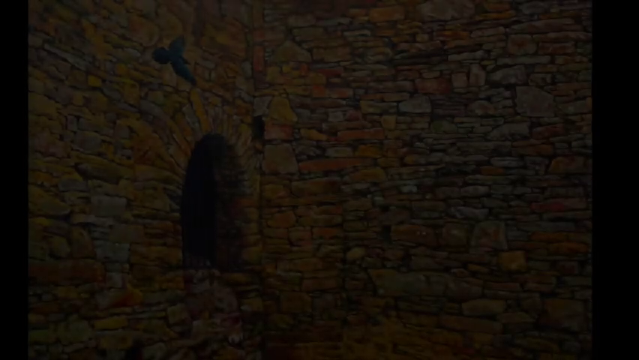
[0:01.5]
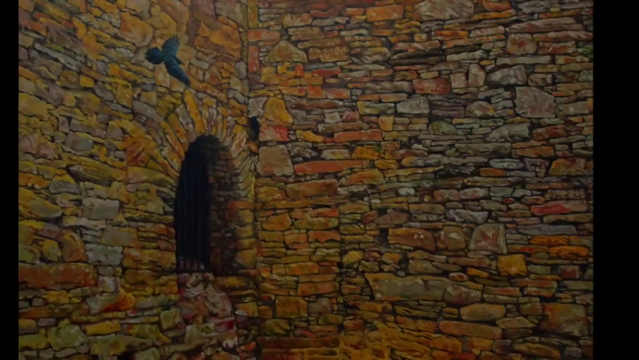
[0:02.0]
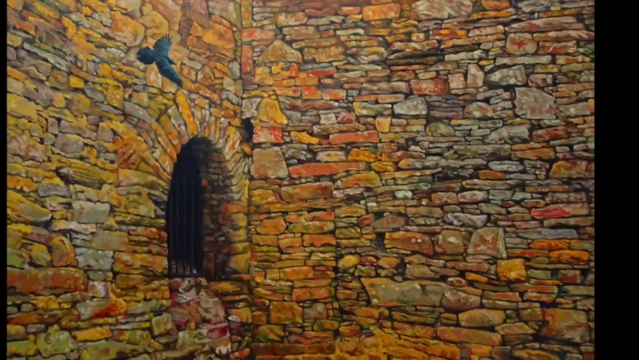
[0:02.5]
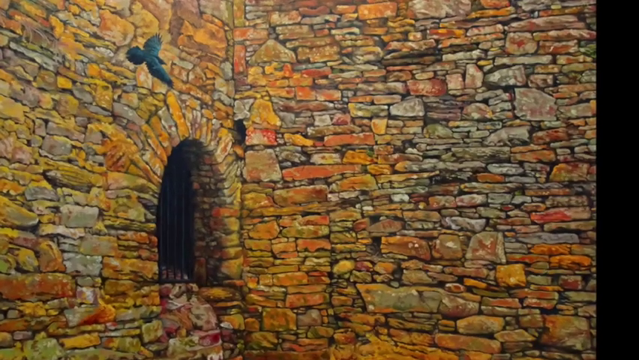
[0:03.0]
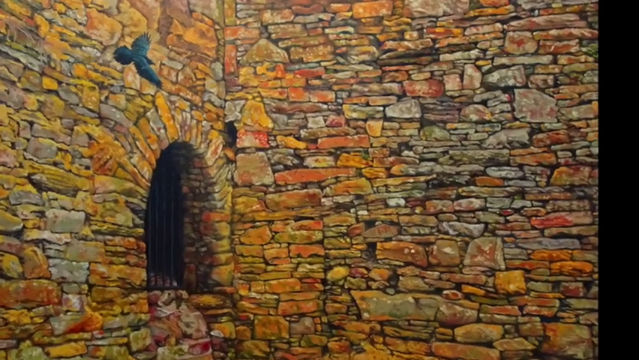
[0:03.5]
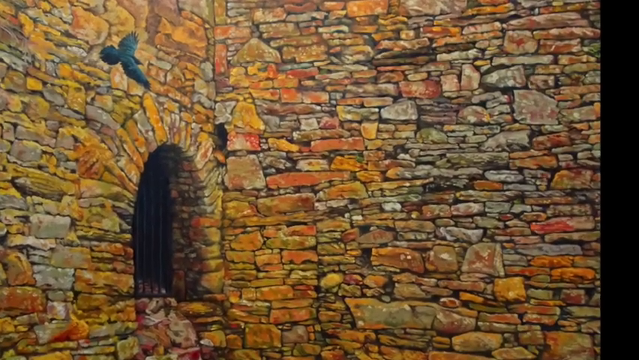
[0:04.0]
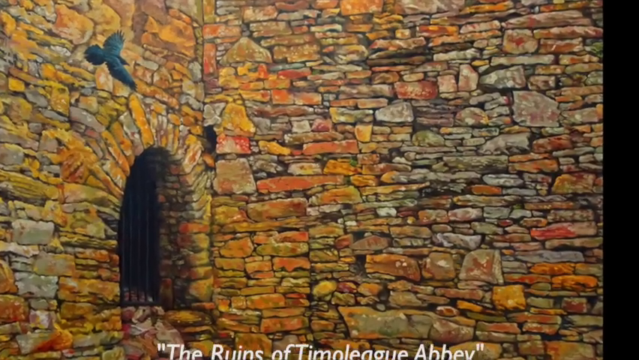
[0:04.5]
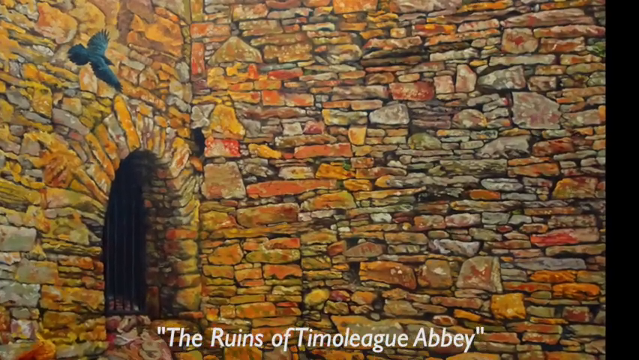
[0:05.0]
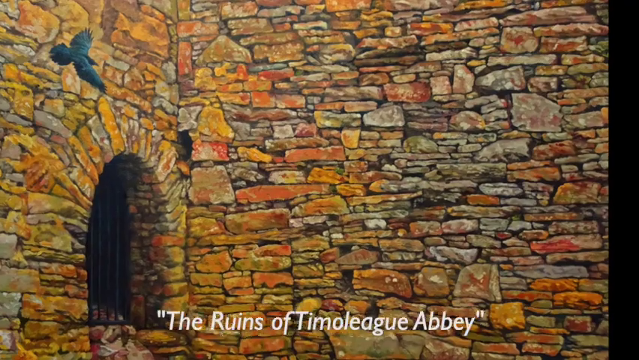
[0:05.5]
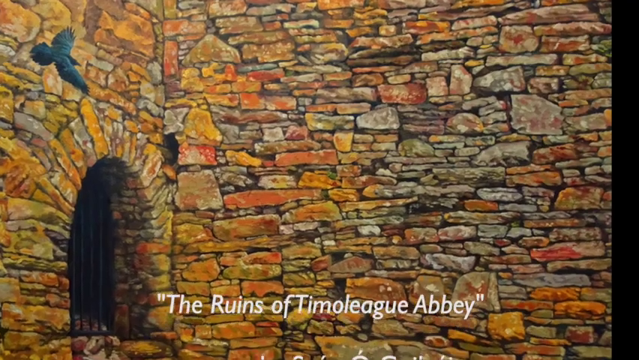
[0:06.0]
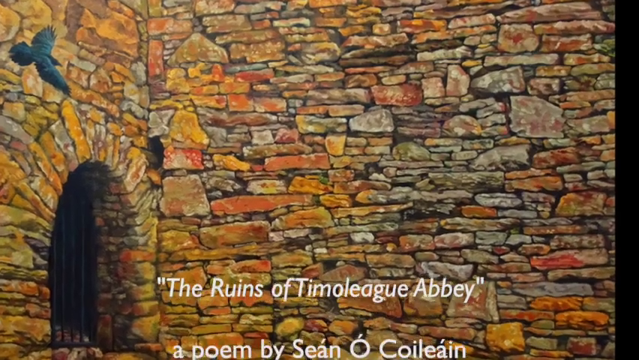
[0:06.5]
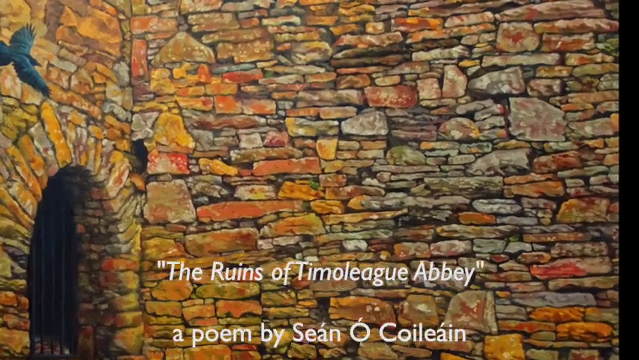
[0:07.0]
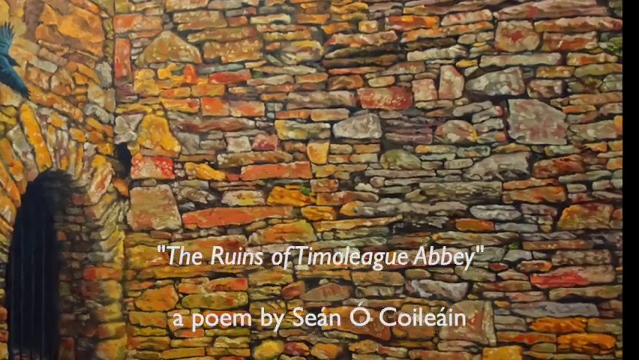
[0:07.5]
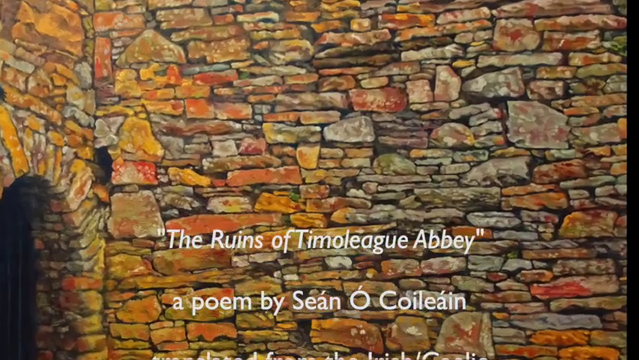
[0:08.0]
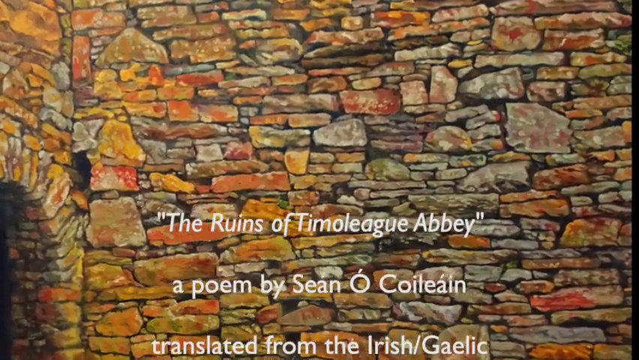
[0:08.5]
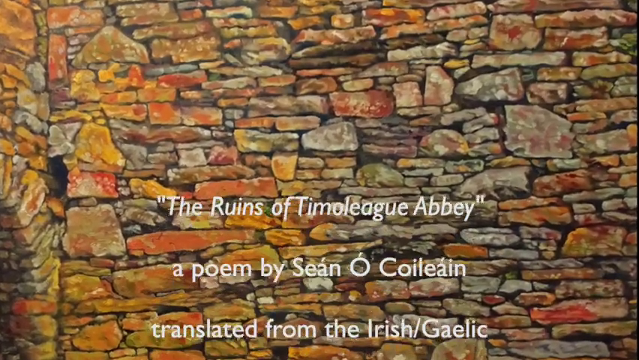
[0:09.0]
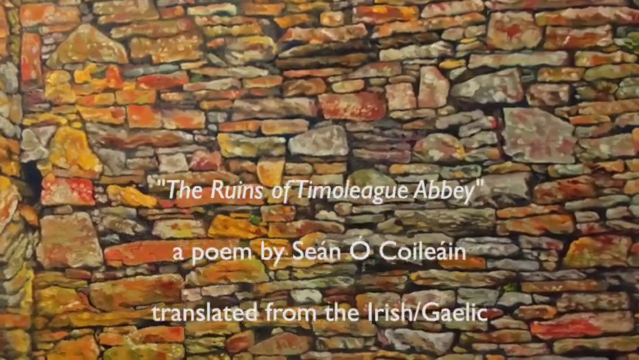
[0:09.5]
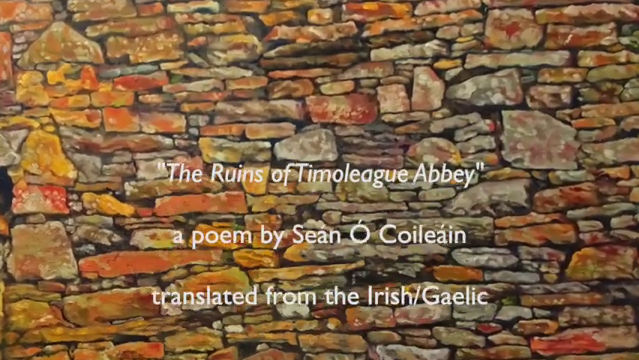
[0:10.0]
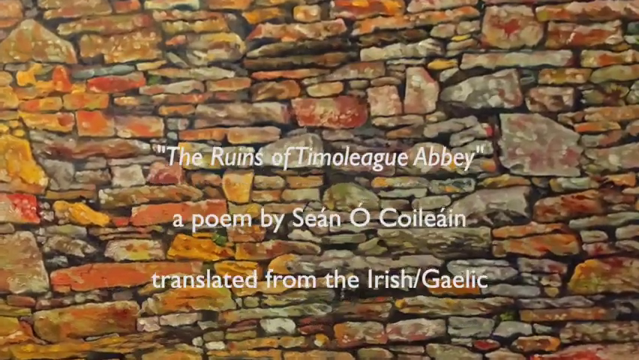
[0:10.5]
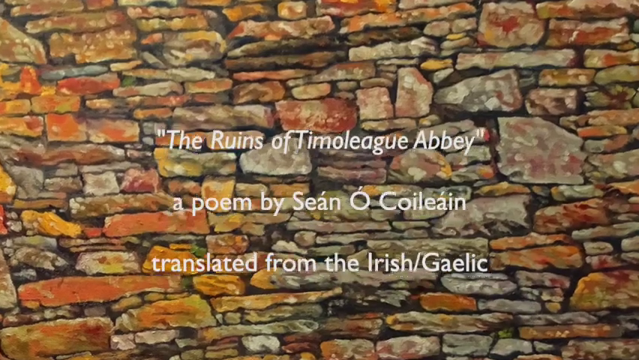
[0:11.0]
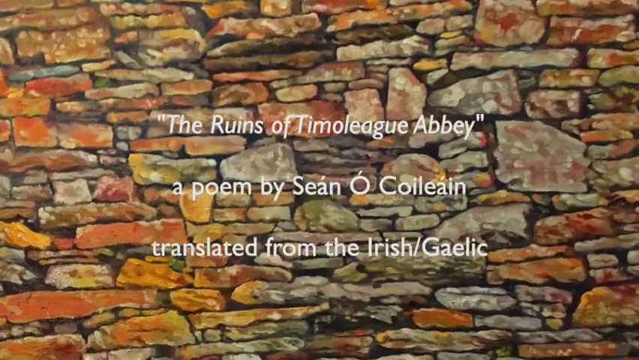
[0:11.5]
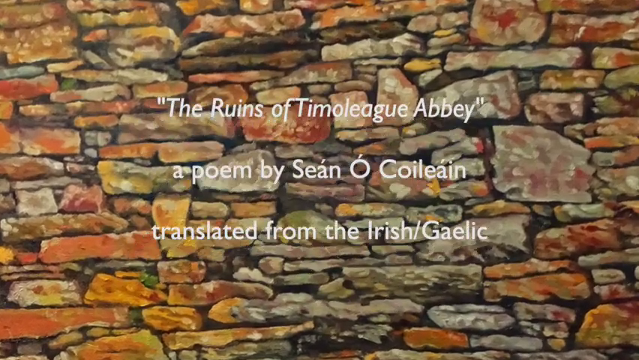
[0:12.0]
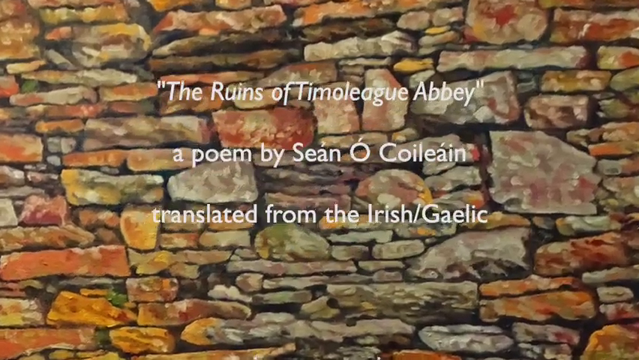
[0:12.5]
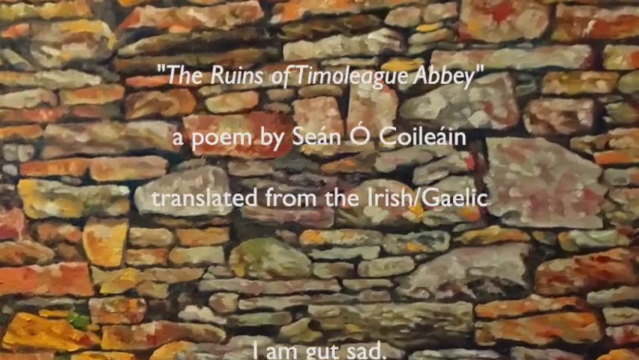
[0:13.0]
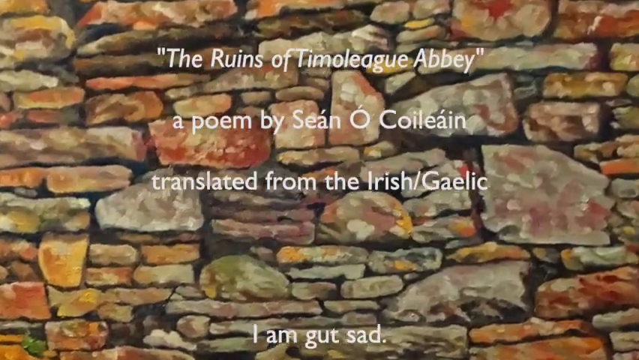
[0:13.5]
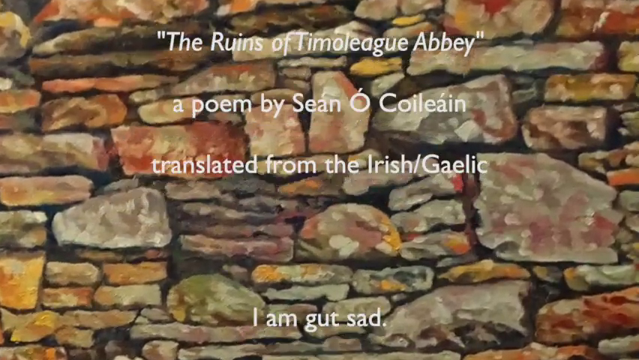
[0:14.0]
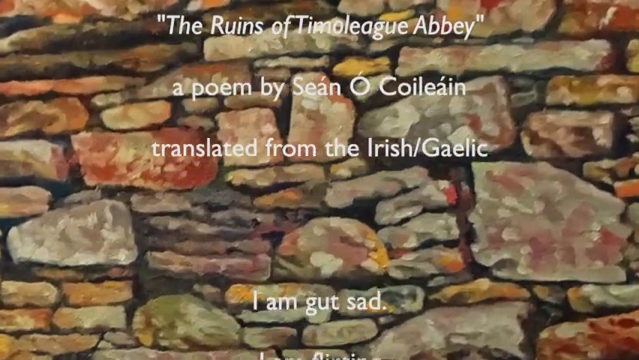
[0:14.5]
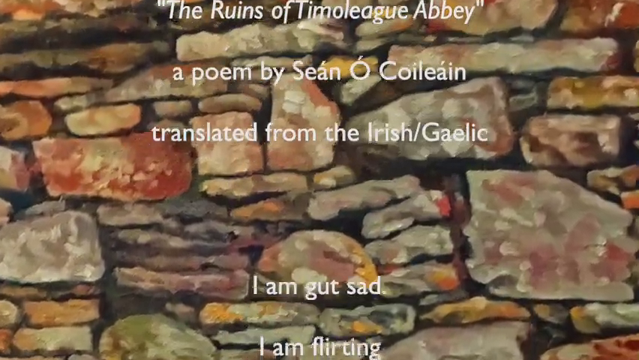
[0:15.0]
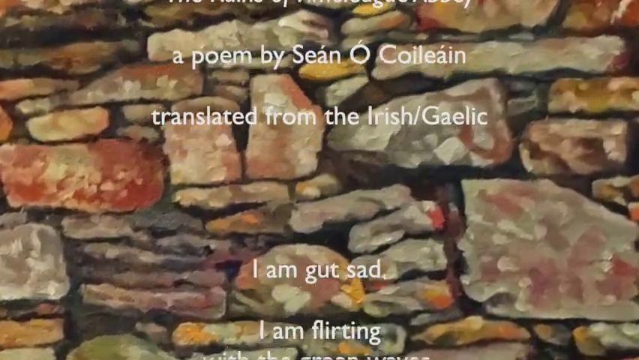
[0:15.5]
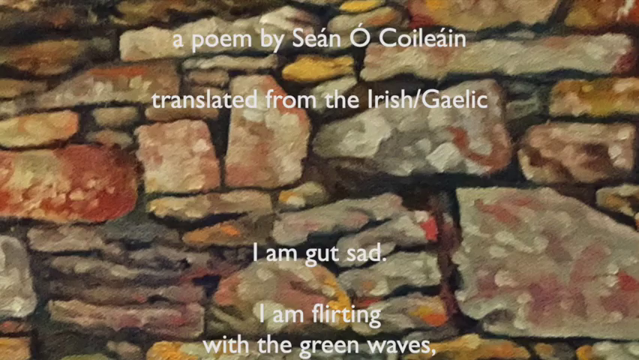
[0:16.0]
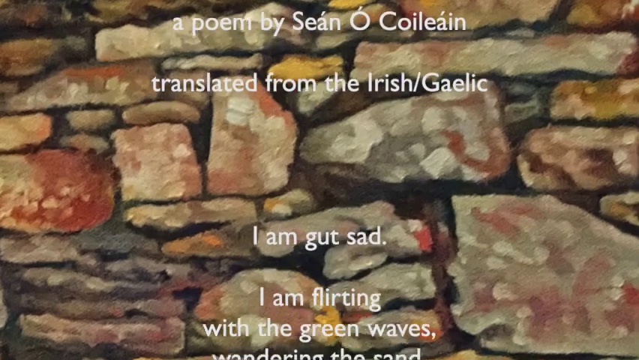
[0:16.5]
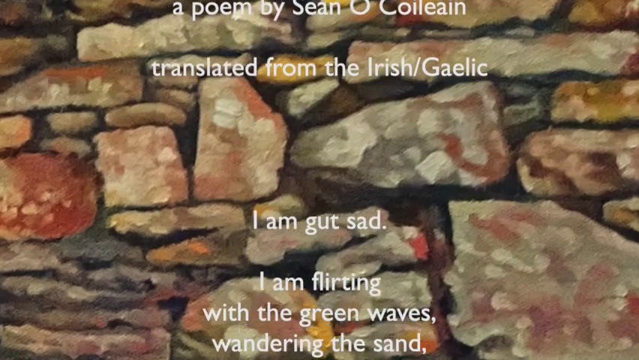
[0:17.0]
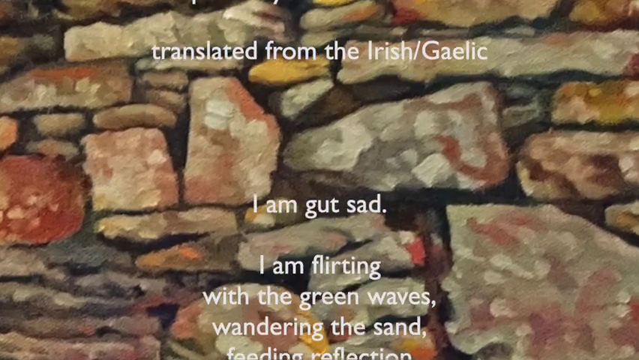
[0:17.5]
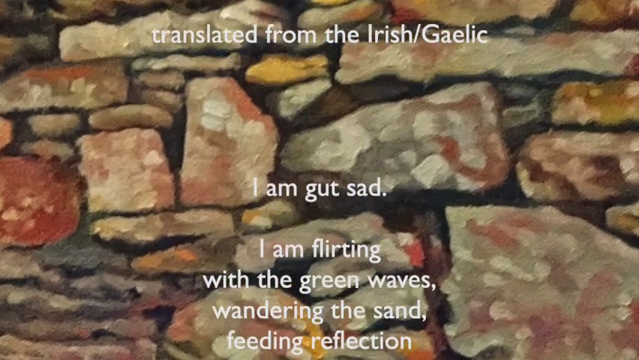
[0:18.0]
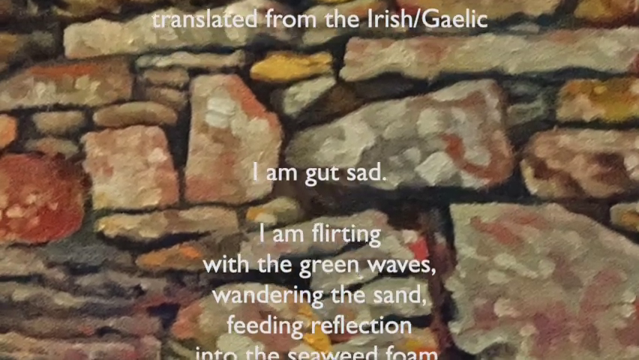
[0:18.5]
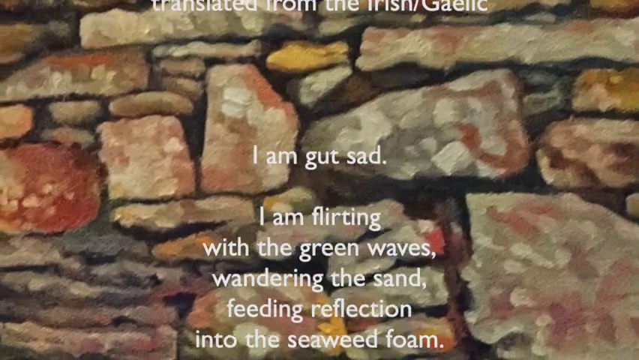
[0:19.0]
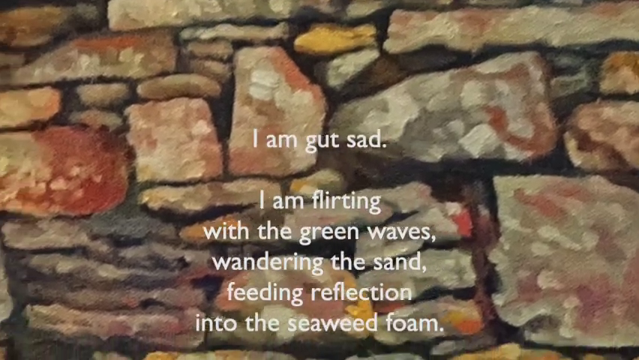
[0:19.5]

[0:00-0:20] A close-up shows what appears to be the wall of a building made of cobblestones layered like bricks, in reddish browns, yellows, tans and grays. On the left side there appears to be a black crow, flying. There is also a window opening with black metal bars. It appears not to be a real building but possibly a portrait or painting of one. A poem appears, identified as "The Ruins of Timoleague Abbey," a poem by Sean O'Klean, translated from Irish to Gaelic. It begins: "I am gut-sad. I am flirting with the green waves wandering the sand, feeding reflection into the seaweed foam." The view moves closer and closer to the bricks or cobblestones, and up close it becomes clear that this is somebody's creation, a drawing they probably made.